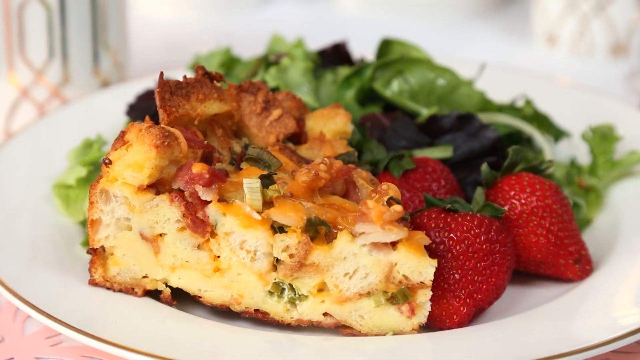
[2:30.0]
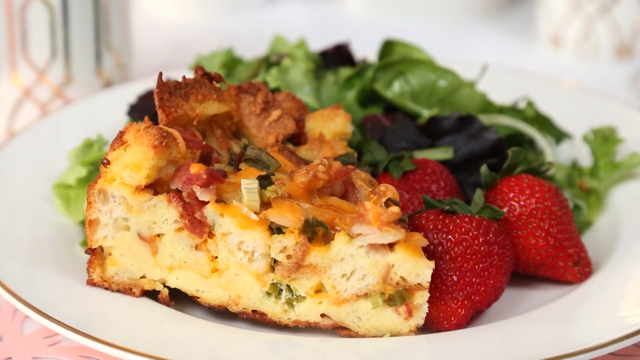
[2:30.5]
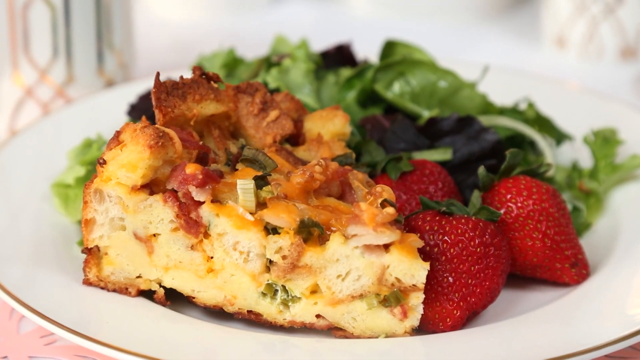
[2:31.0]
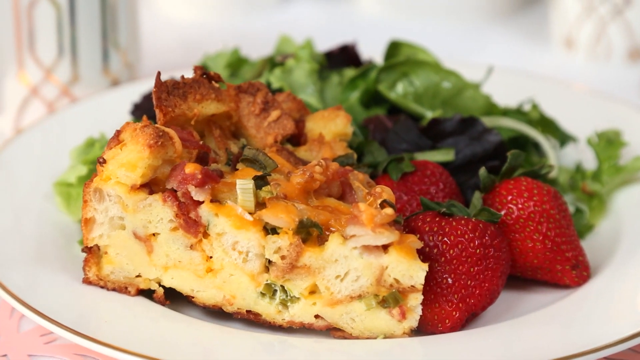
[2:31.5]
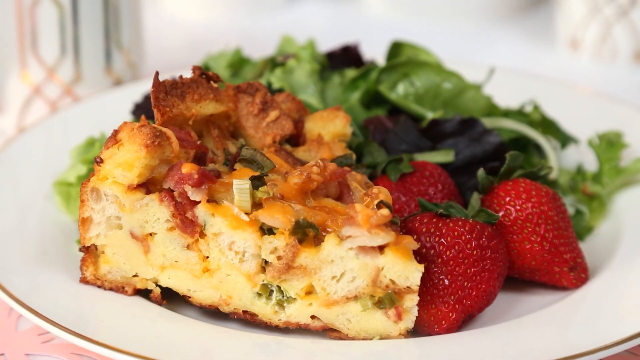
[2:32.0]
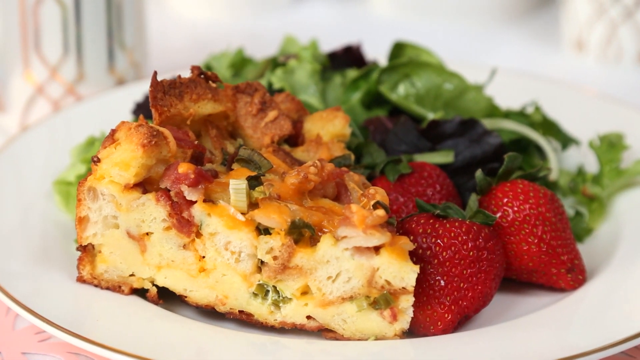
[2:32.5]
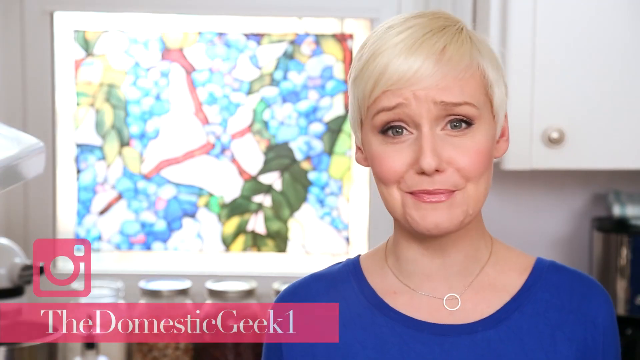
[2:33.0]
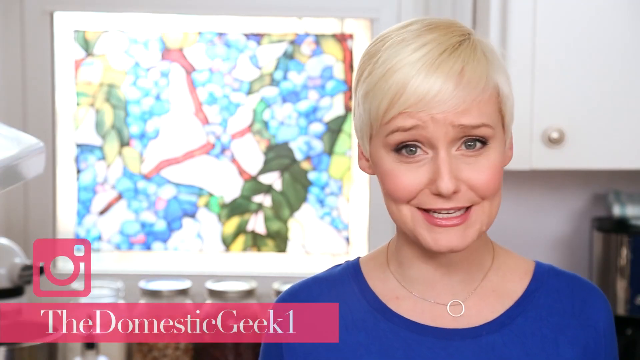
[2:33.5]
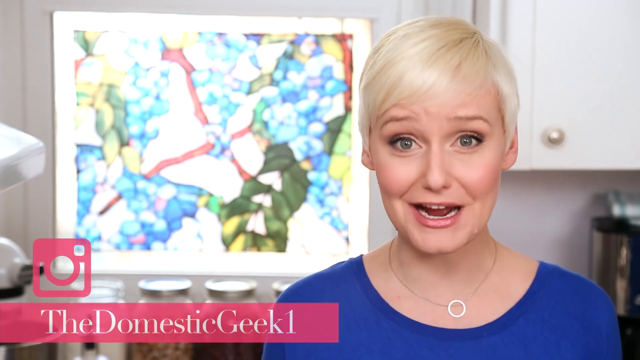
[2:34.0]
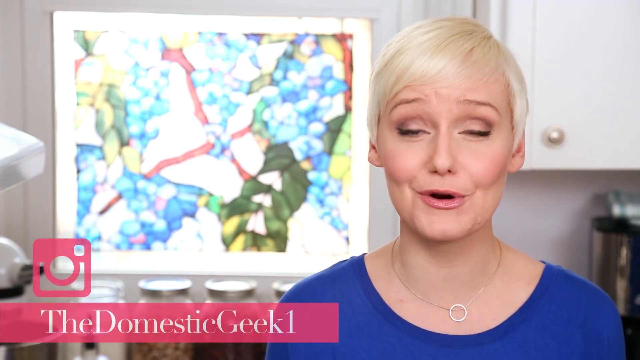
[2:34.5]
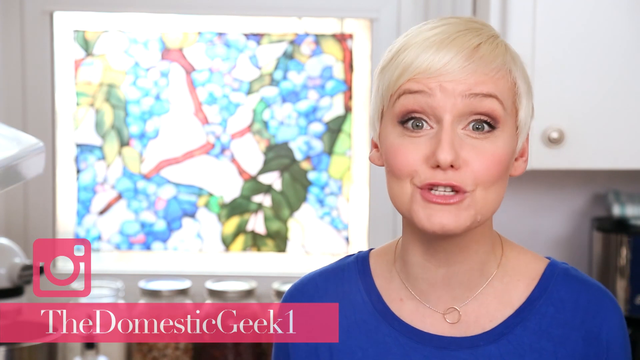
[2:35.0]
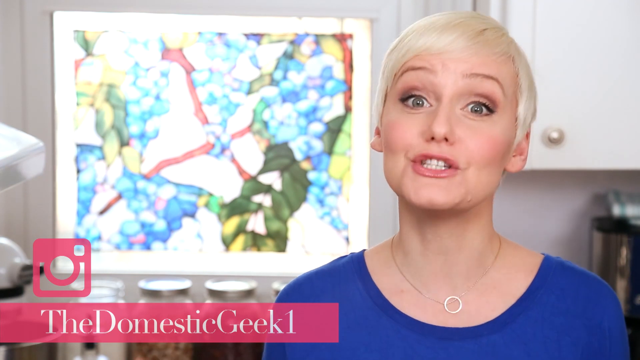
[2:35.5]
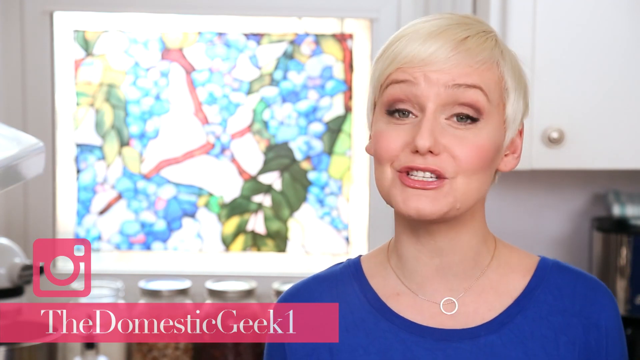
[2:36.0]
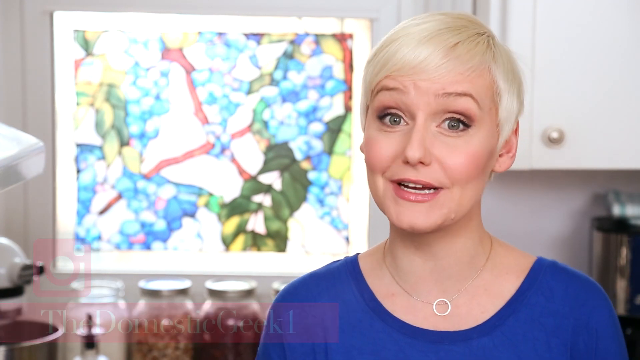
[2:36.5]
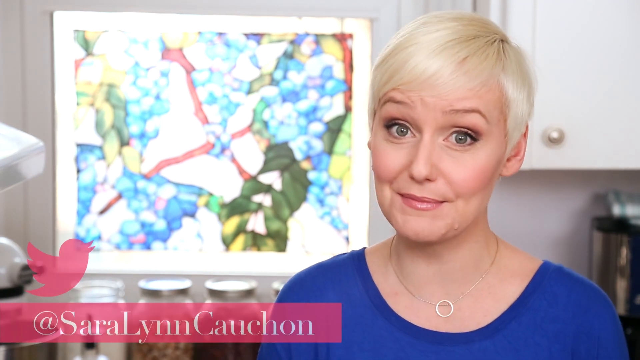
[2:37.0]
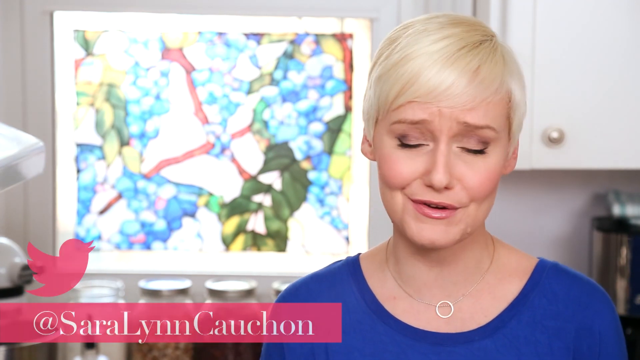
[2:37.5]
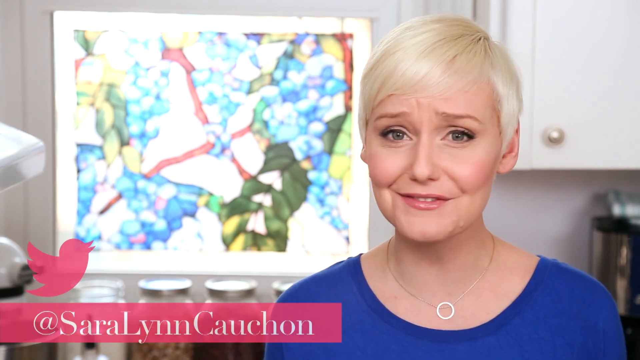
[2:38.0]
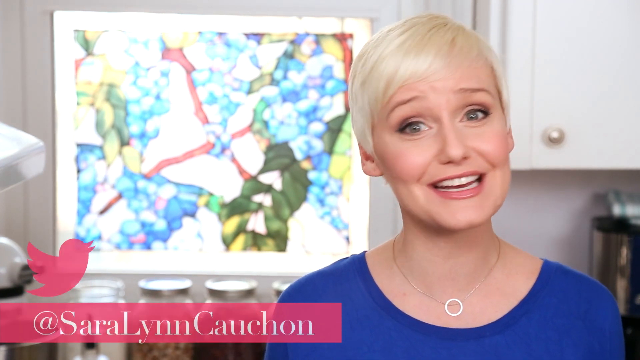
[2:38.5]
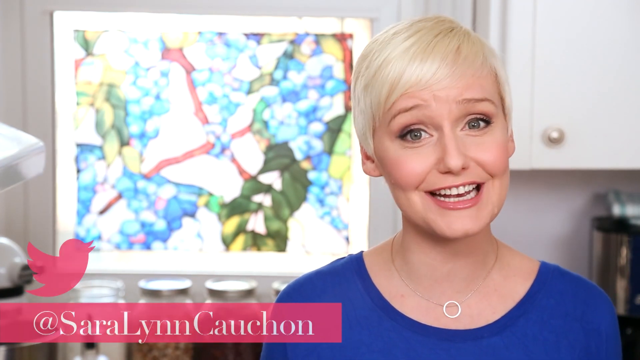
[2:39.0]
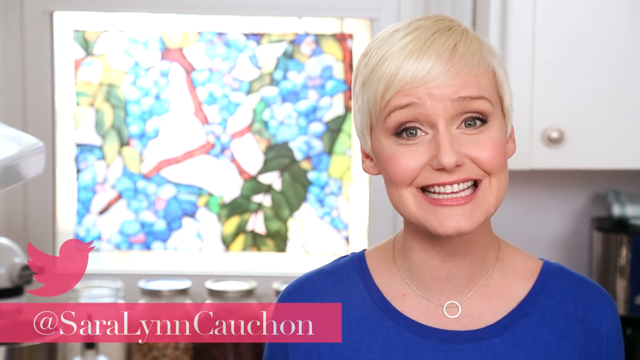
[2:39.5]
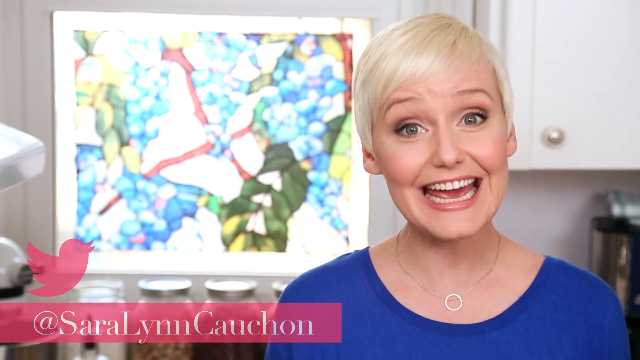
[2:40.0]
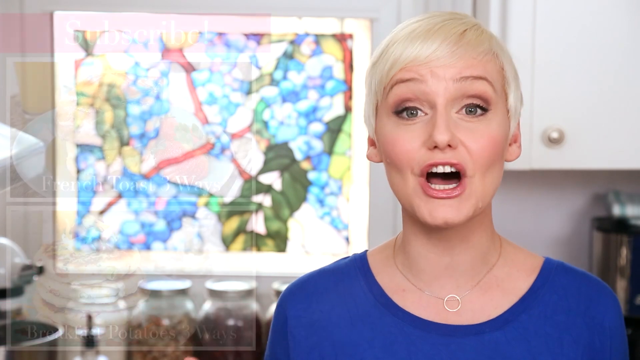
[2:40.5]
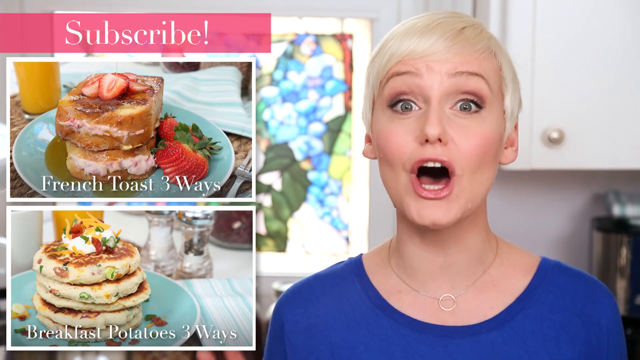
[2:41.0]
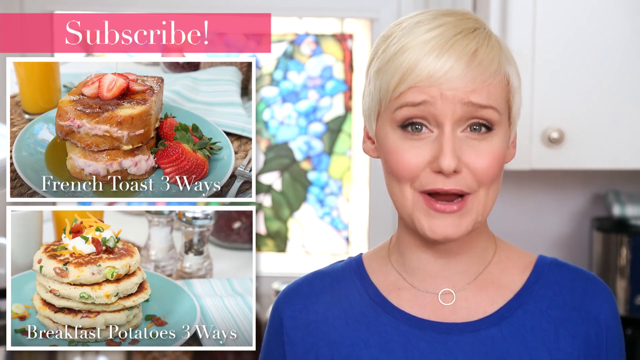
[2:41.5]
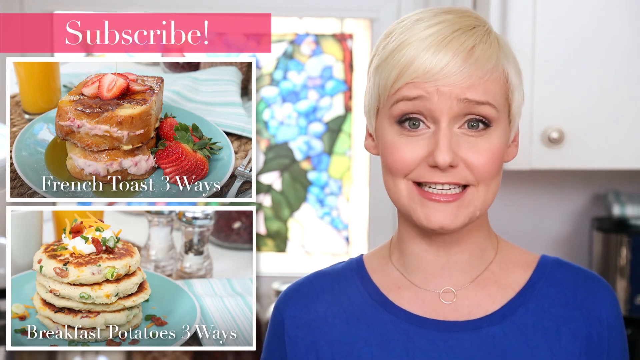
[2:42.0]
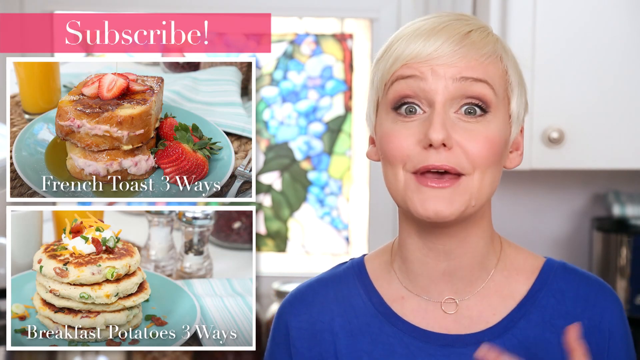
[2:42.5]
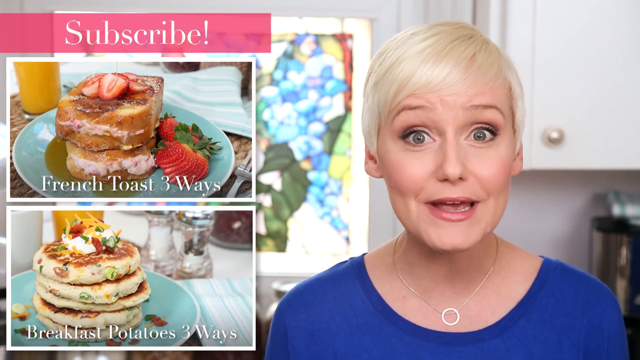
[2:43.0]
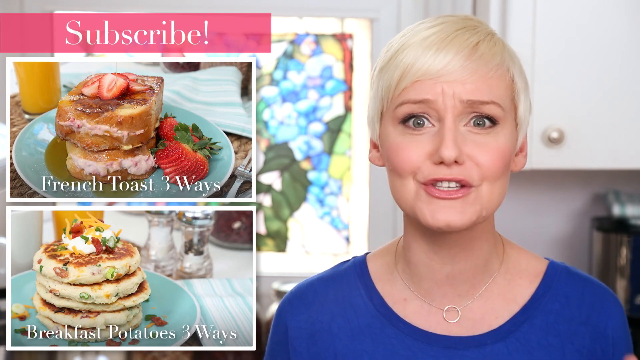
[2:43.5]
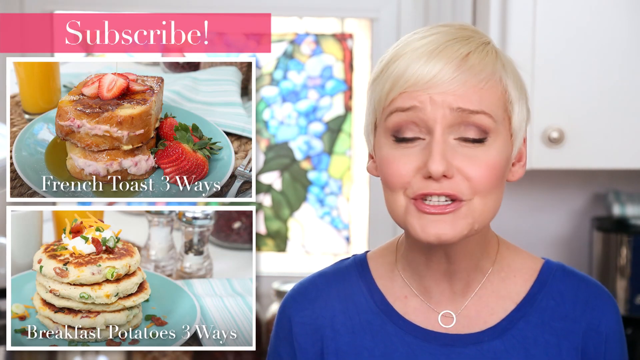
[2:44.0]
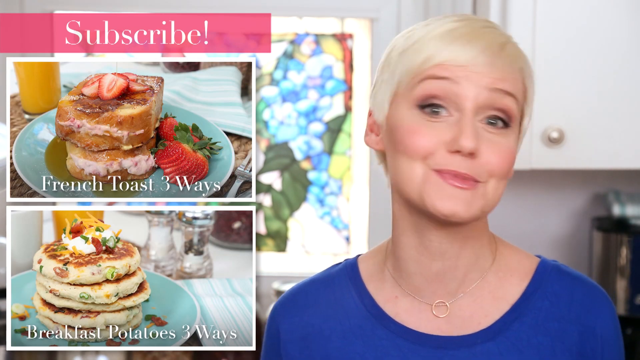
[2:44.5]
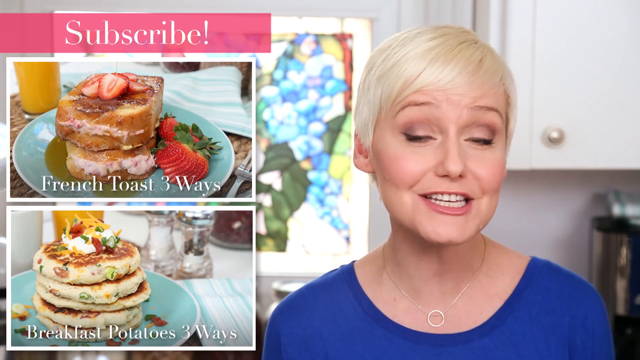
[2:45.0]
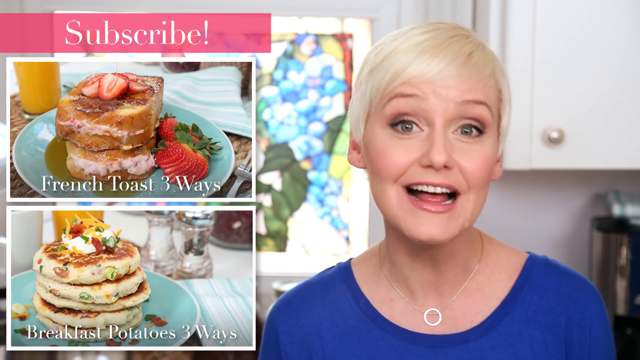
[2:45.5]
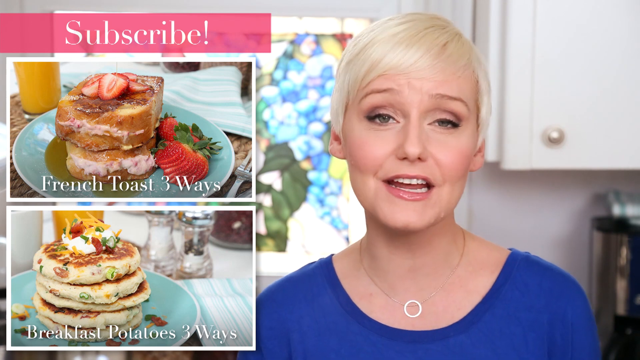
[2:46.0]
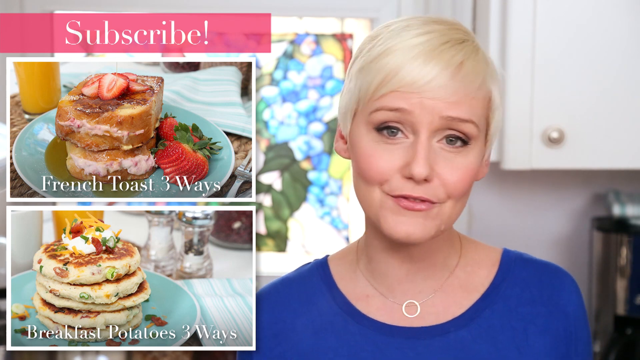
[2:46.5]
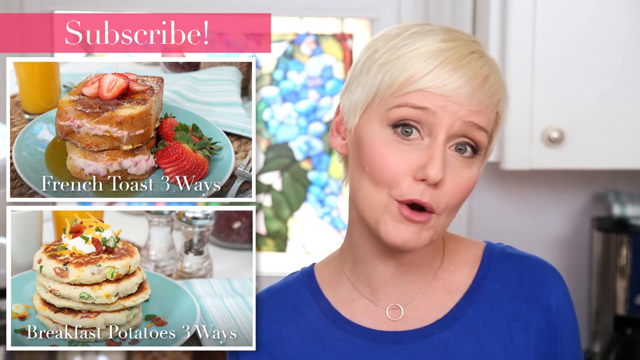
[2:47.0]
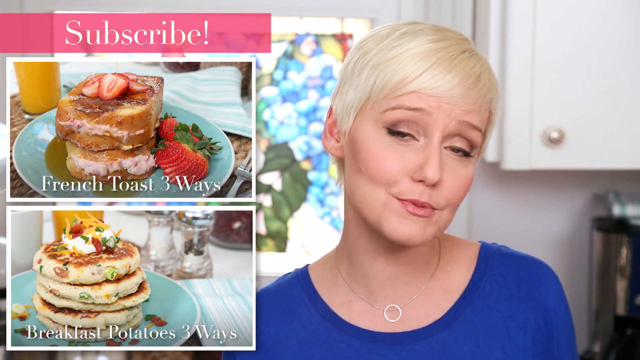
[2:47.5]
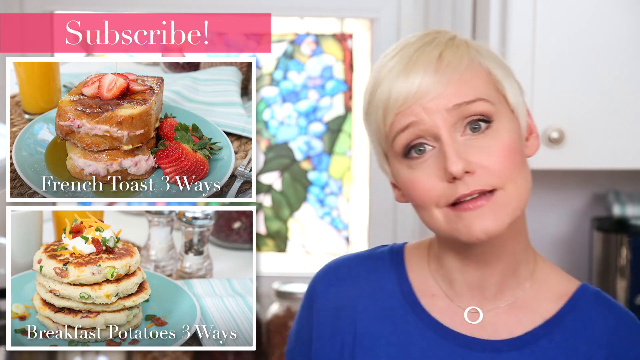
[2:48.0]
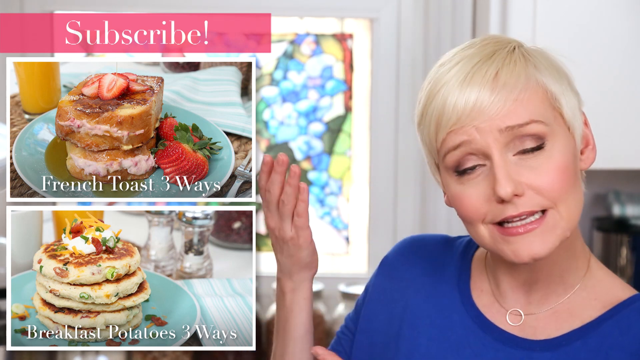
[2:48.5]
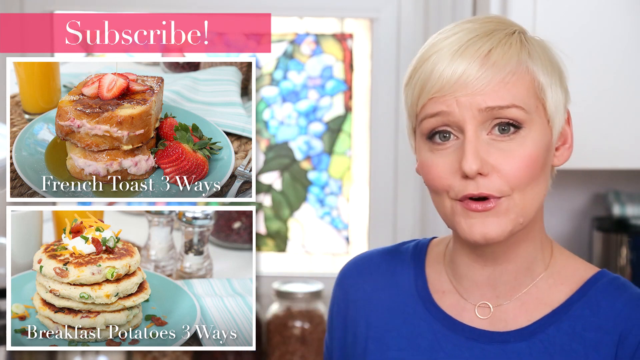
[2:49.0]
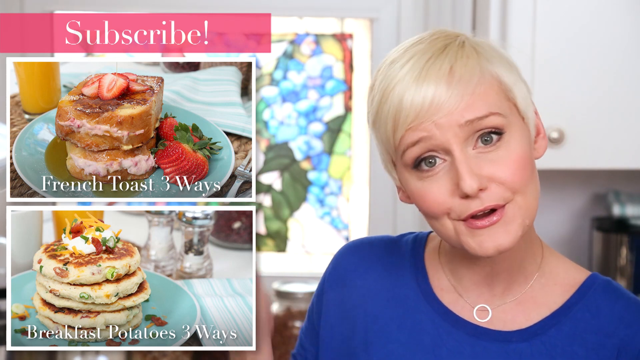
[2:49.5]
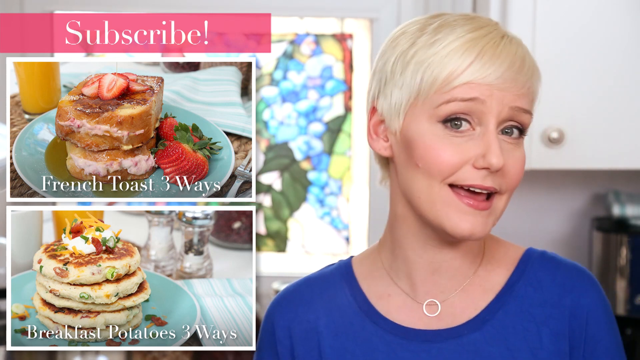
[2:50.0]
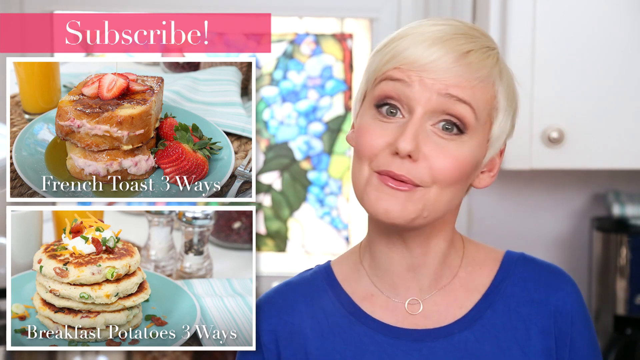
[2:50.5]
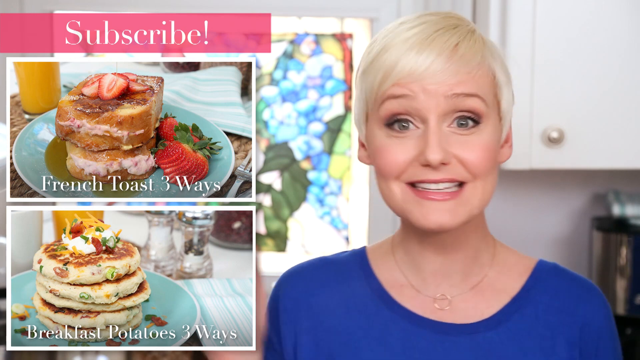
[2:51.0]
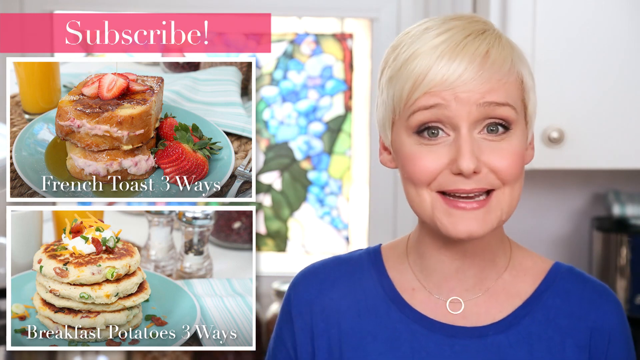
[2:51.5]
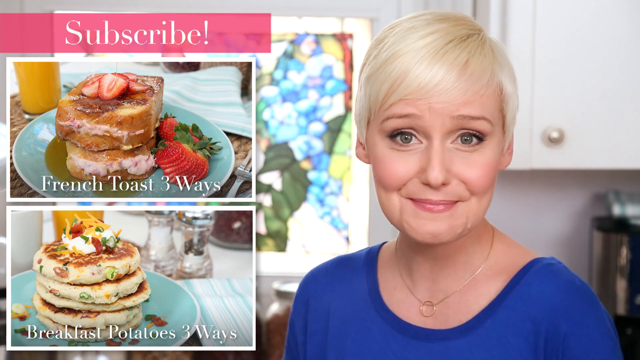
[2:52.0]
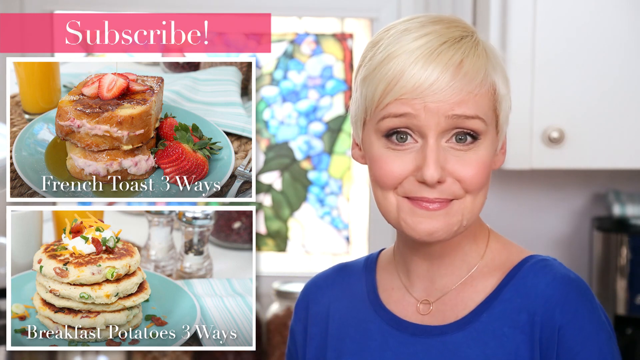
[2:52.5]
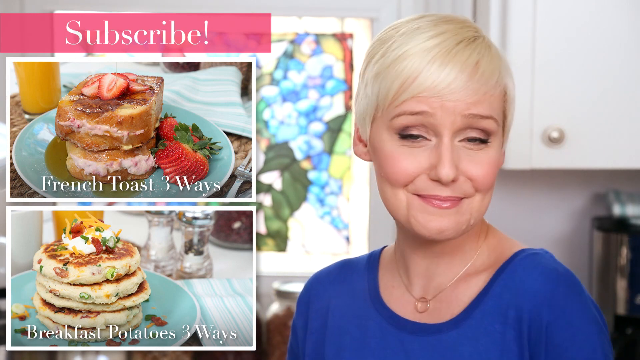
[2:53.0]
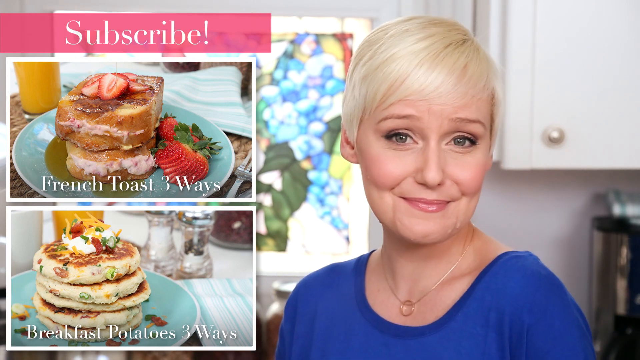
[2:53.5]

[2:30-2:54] A pie-sized slice of the quiche-like dish, with crispy edges but a very fluffy look, is on a white plate with gold edges, with three strawberries next to it and some salad behind it. The woman with platinum blonde hair and a necklace with a circular pendant speaks in the kitchen setting, with the stained glass window and white cabinets behind her. At the bottom of the screen is a Twitter handle, Sarah Lynn Chouchen, and images of other dishes appear, apparently French toast three ways and possibly some fluffy pancakes. At the top is a pink rectangle that says "subscribe!". The woman continues speaking, kind of enthusiastic and energetic, with a very expressive face, kind of bobbing her head for emphasis while looking straight ahead at the camera.